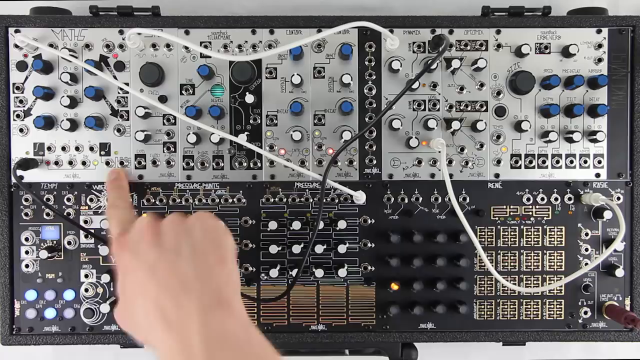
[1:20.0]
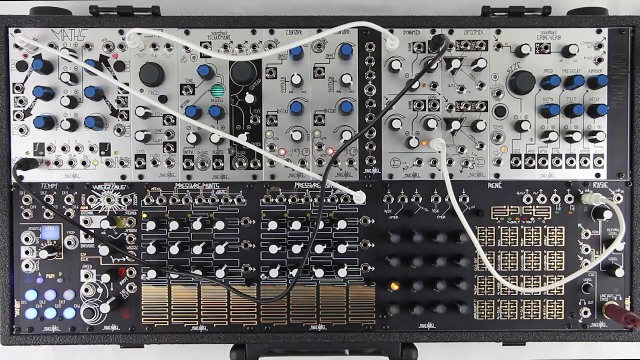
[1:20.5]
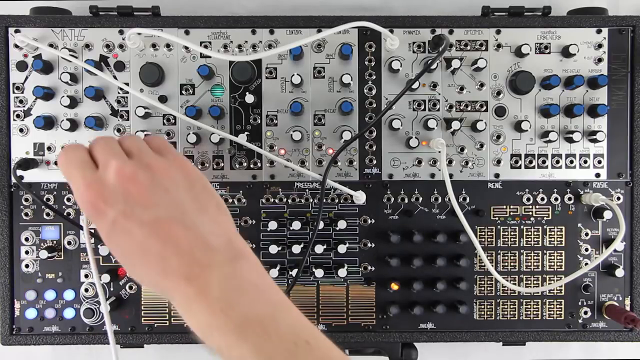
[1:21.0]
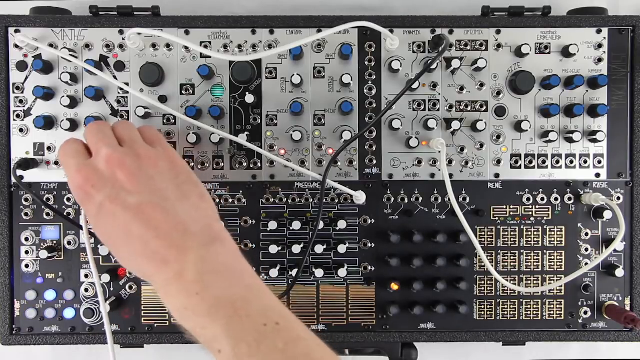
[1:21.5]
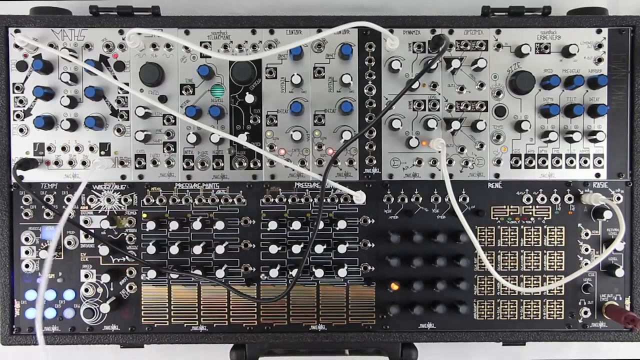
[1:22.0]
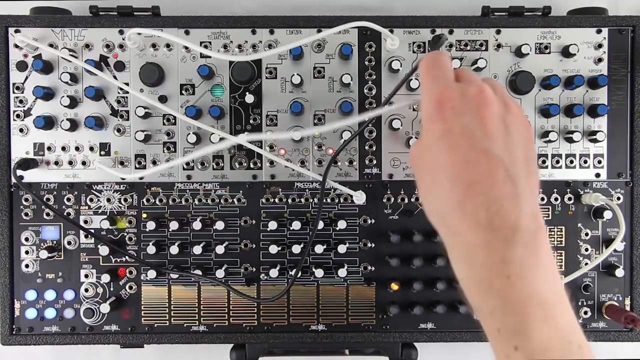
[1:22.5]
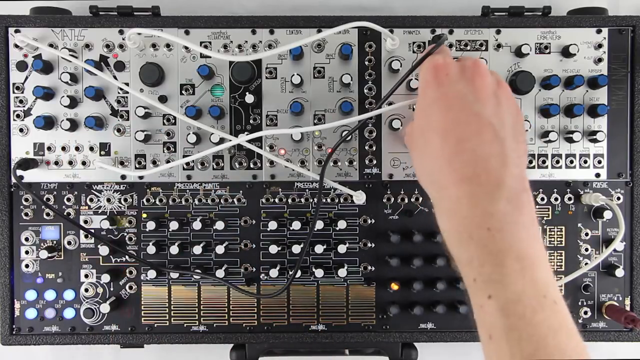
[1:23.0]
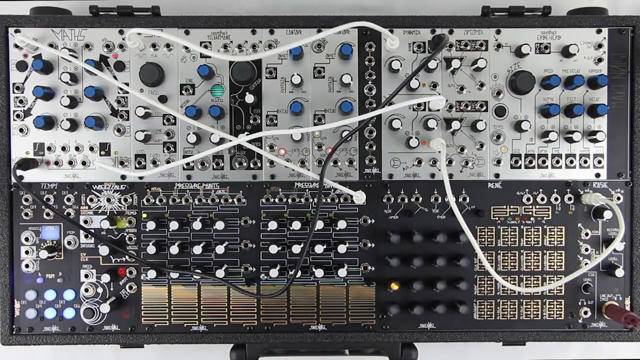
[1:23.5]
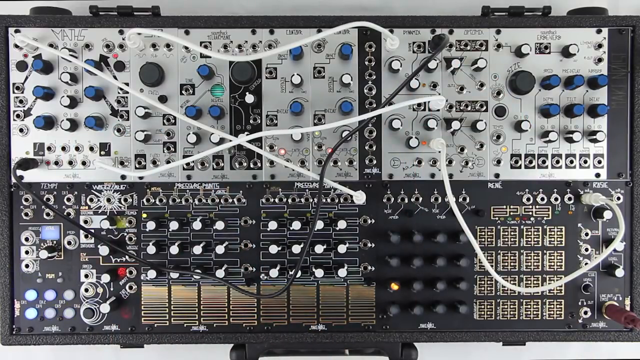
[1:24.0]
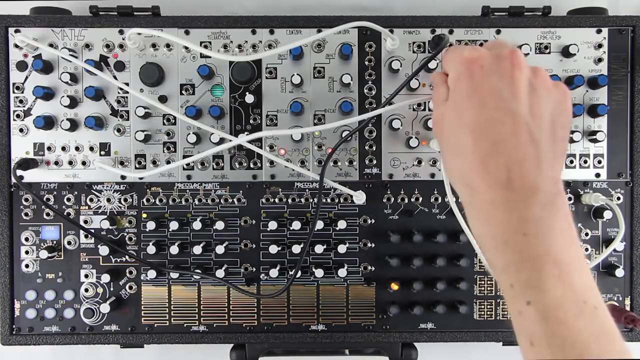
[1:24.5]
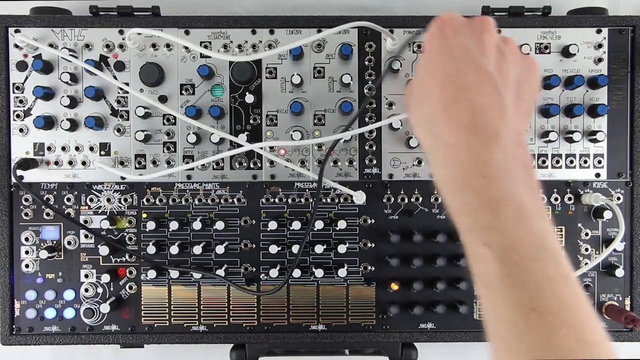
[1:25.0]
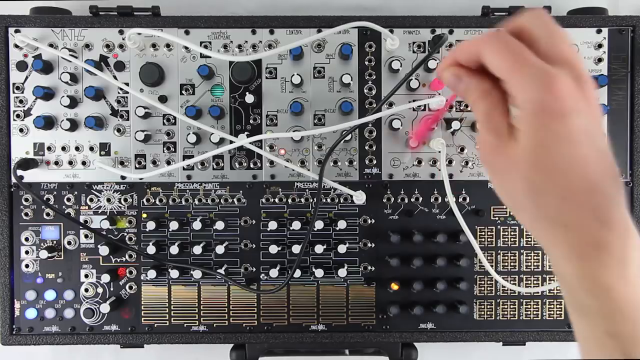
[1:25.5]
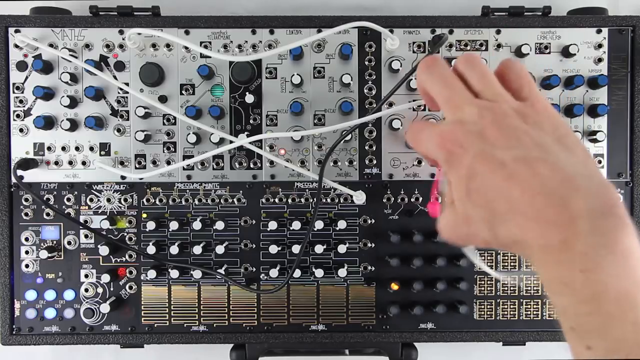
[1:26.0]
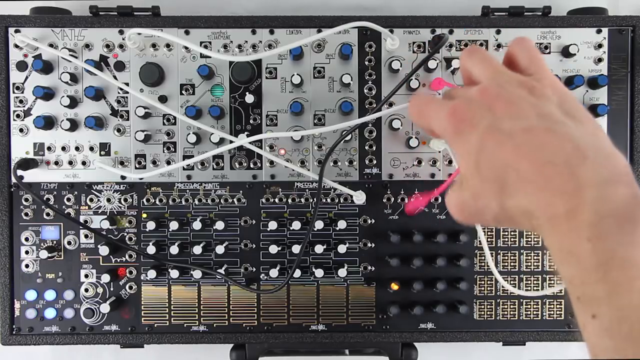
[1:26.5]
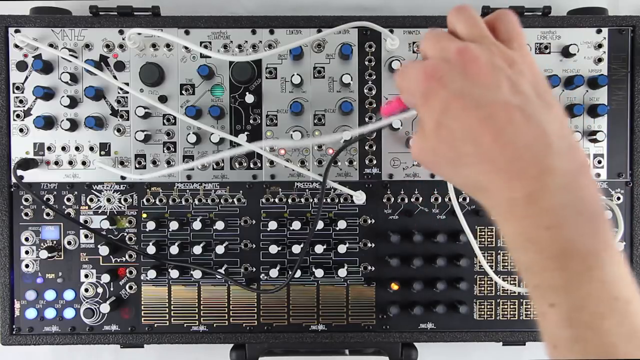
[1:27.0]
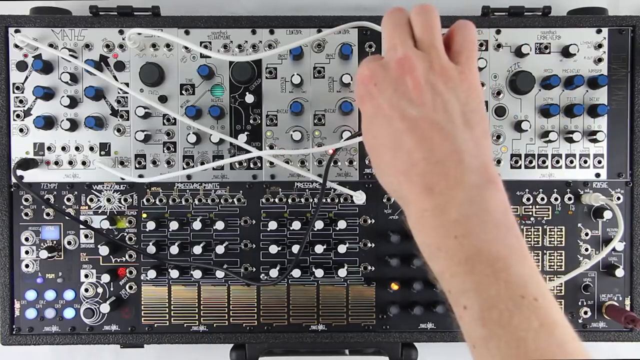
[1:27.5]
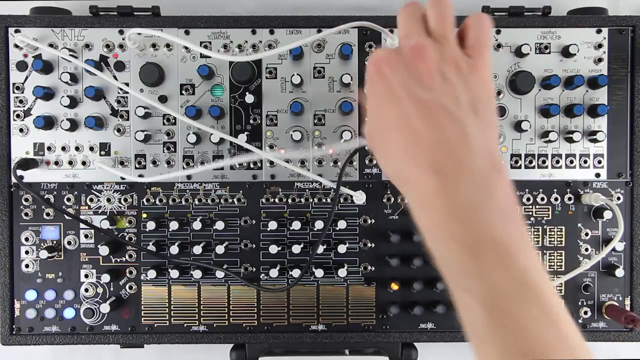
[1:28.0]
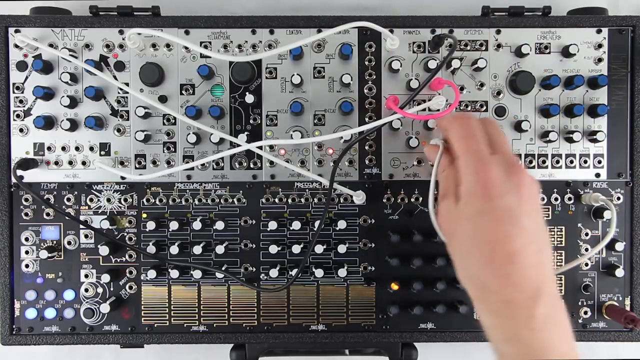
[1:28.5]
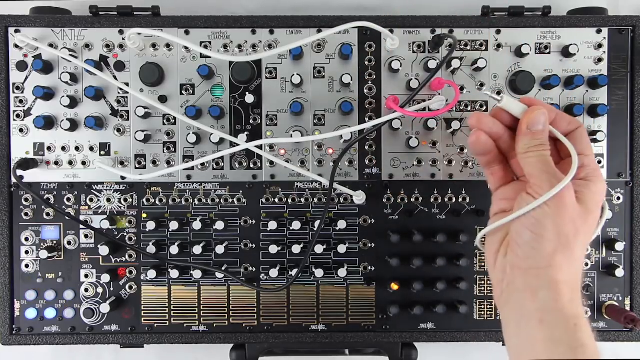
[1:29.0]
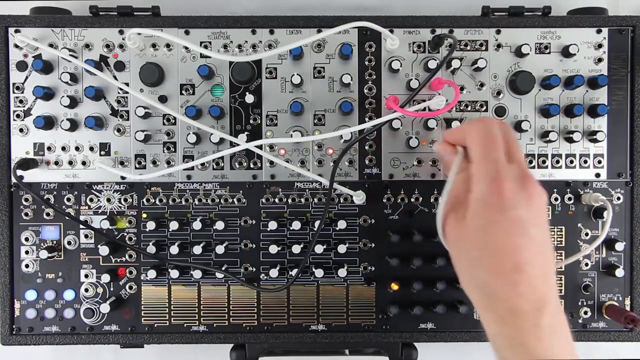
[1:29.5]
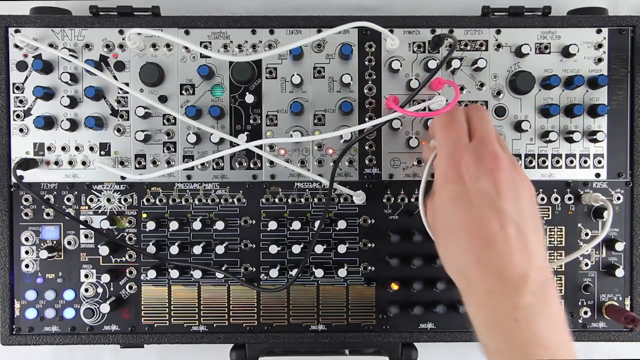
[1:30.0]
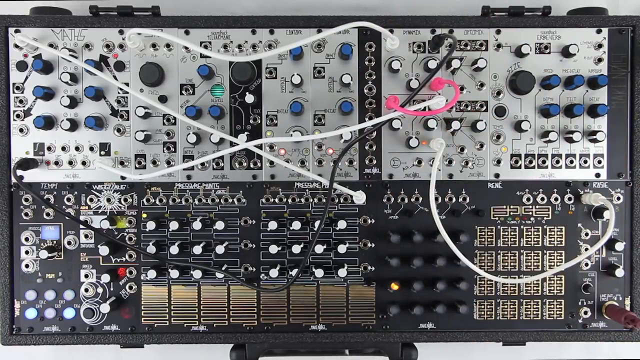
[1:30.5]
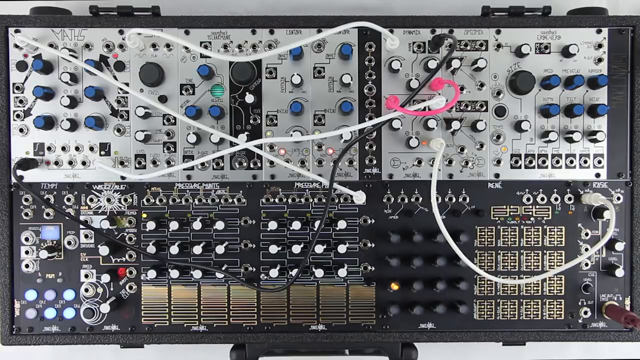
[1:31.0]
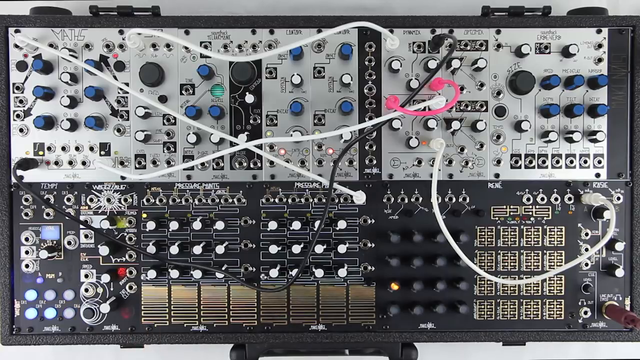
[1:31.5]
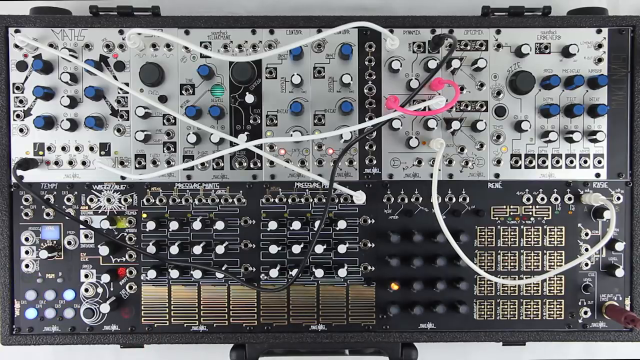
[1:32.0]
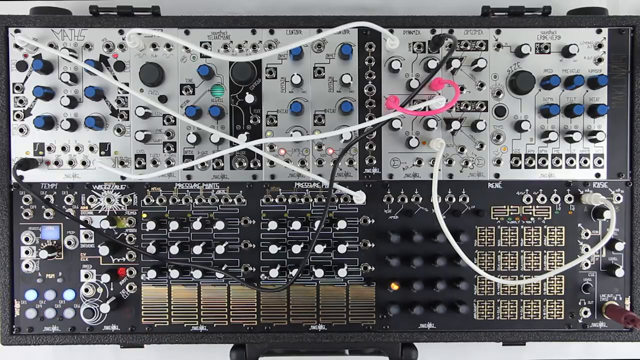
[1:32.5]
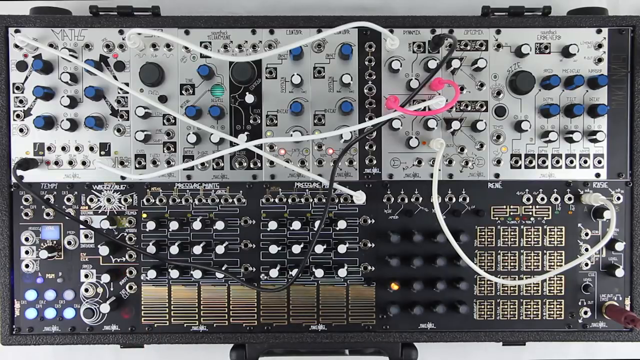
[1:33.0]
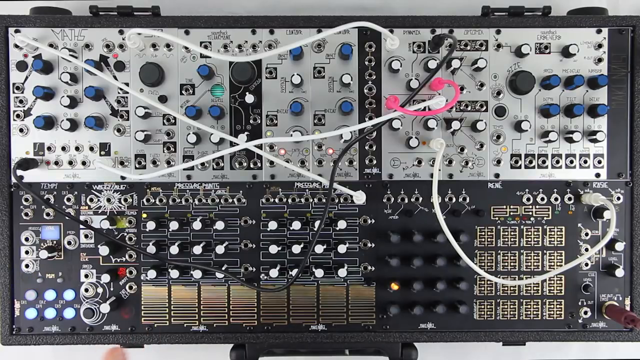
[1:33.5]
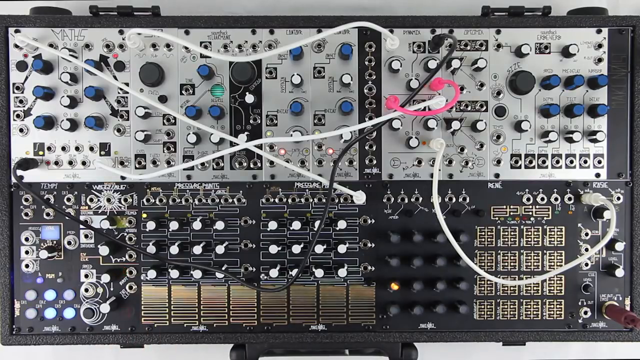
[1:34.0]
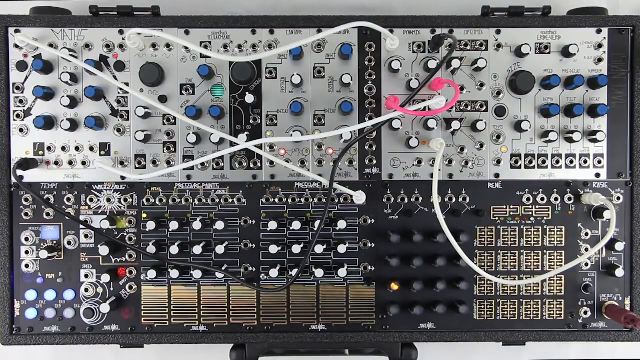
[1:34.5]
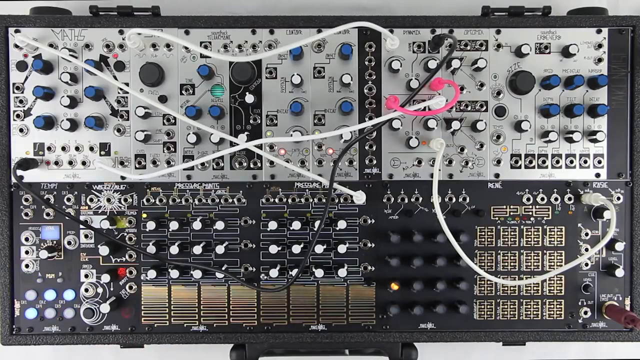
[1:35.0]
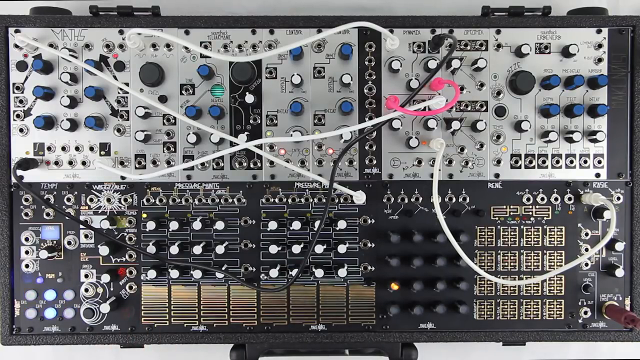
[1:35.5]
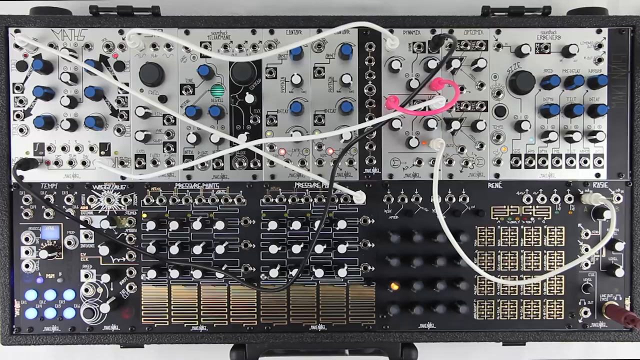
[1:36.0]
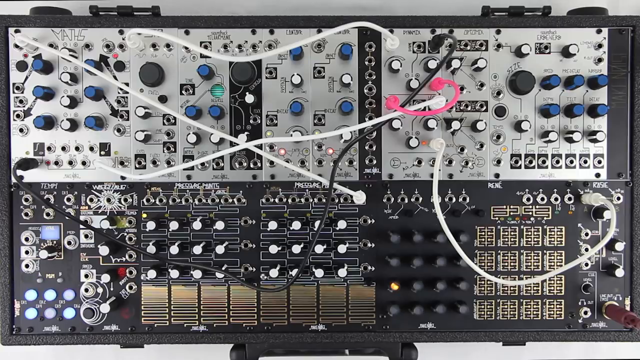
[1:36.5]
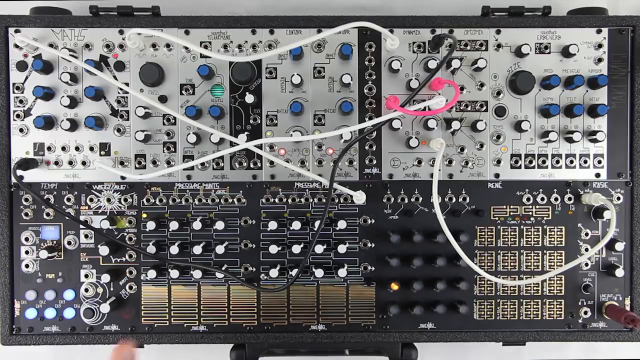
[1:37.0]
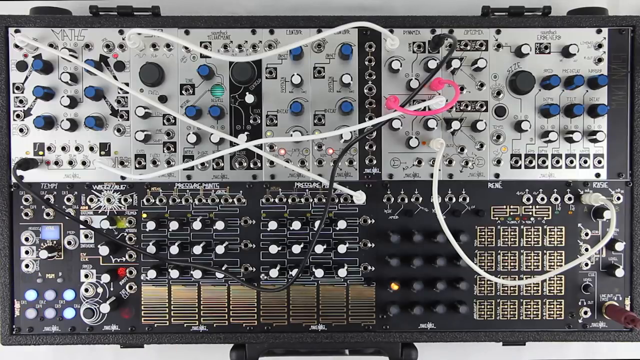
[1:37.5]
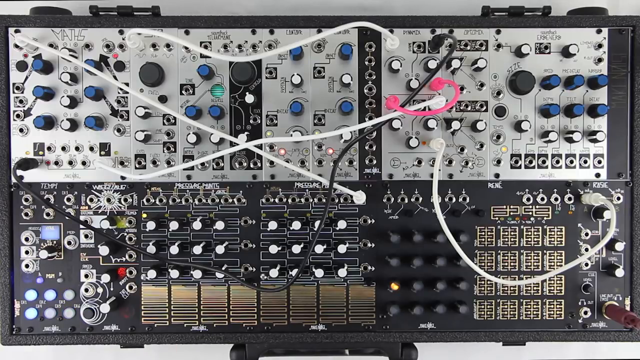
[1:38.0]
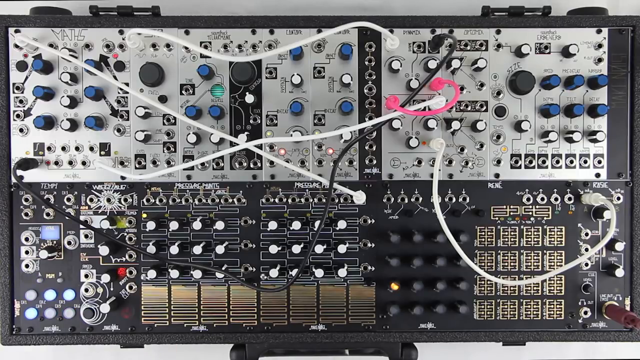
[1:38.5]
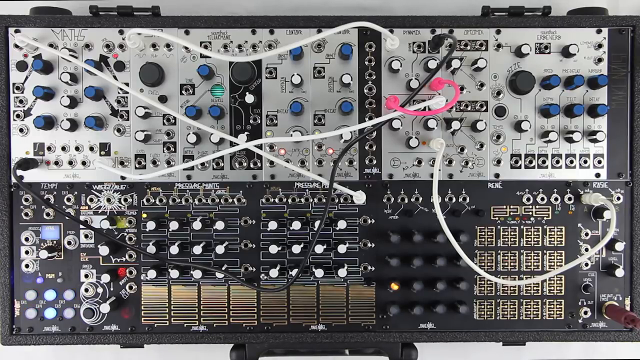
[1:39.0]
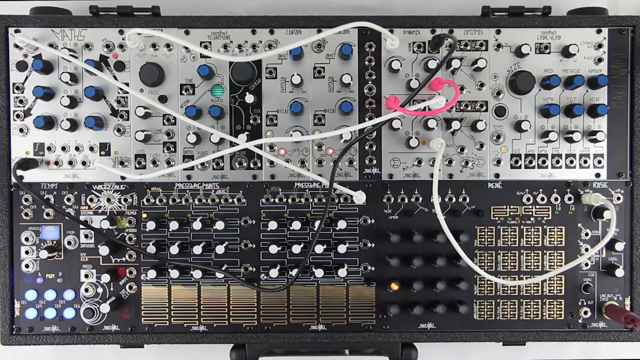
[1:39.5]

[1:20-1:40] A human hand works on a live circuit board, taking peg wires and inserting them where the graphic indicates. A white wire goes into two holes, a black wire into two holes, and then a shorter red wire into two holes that are diagonally across from each other, matching the holes on the board to the connections in the diagram.